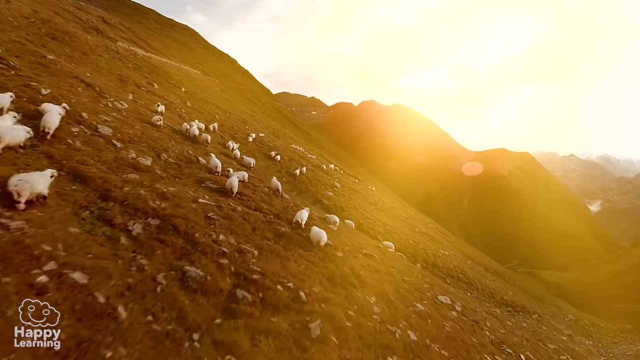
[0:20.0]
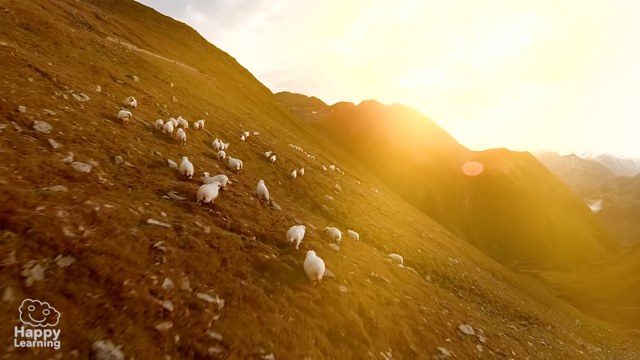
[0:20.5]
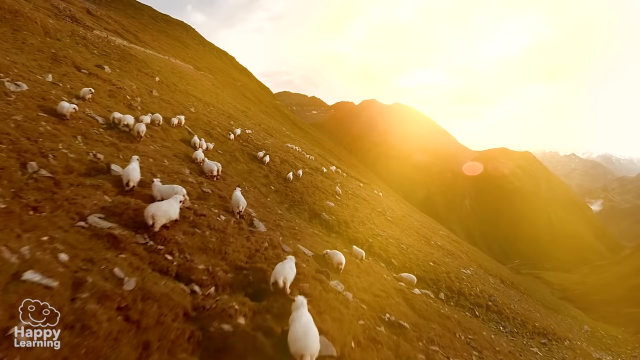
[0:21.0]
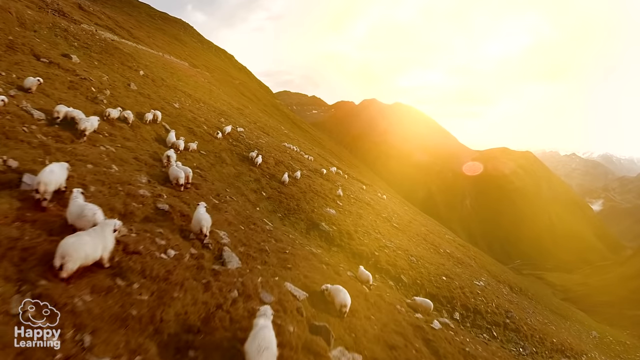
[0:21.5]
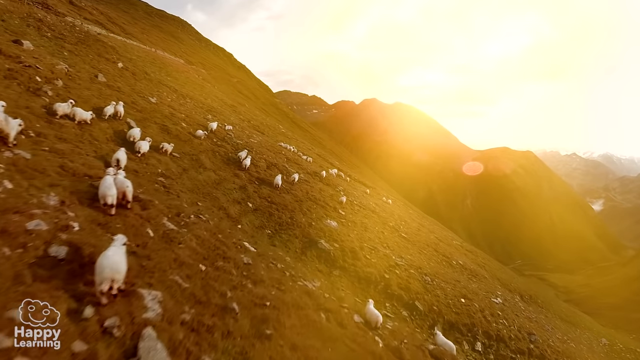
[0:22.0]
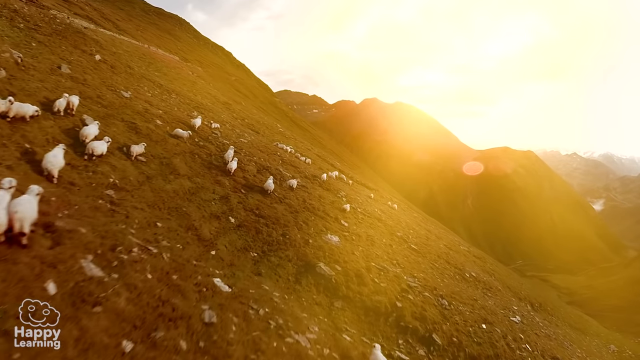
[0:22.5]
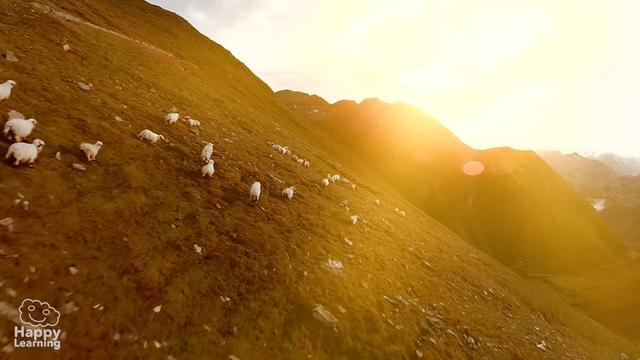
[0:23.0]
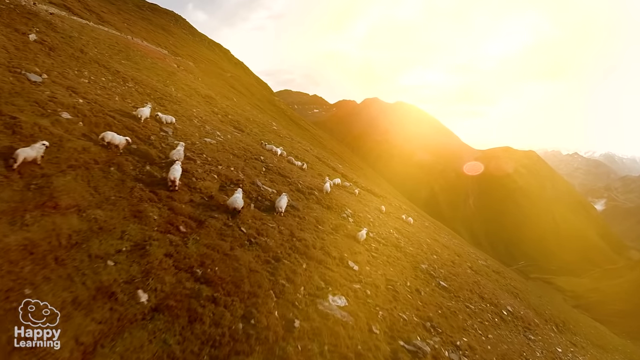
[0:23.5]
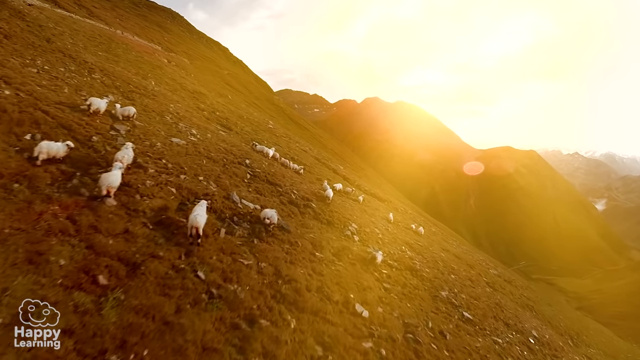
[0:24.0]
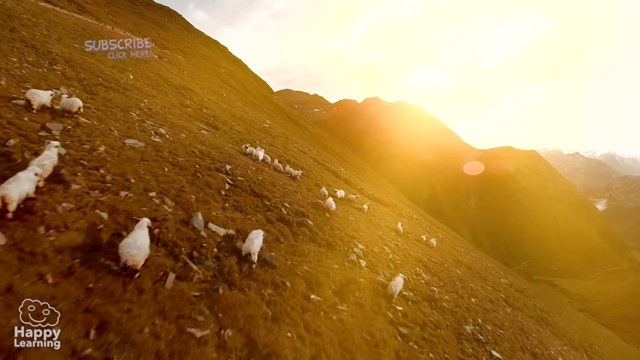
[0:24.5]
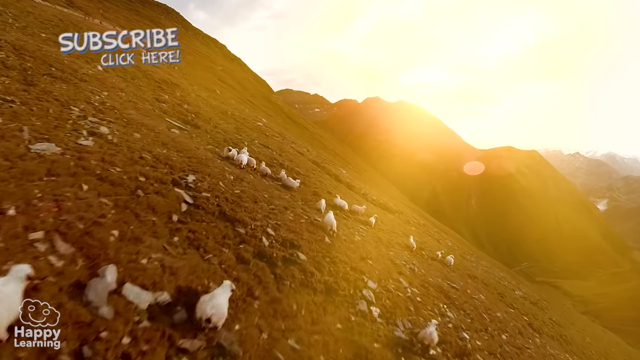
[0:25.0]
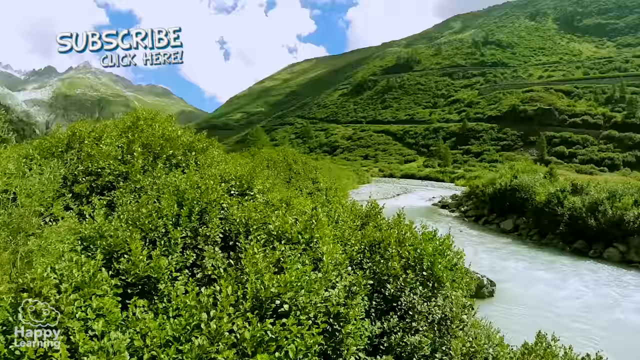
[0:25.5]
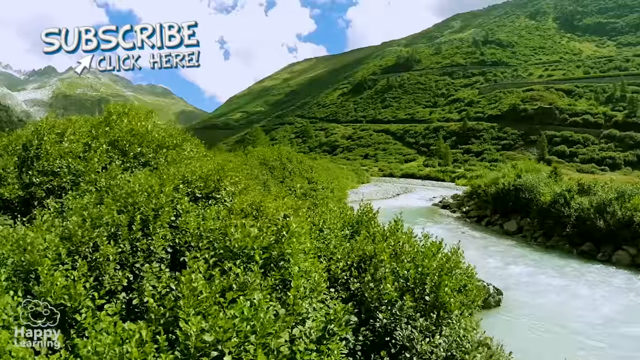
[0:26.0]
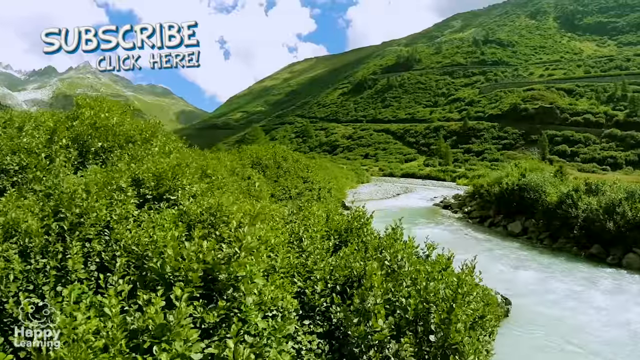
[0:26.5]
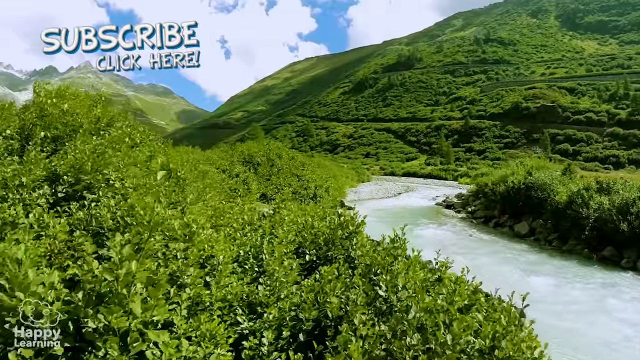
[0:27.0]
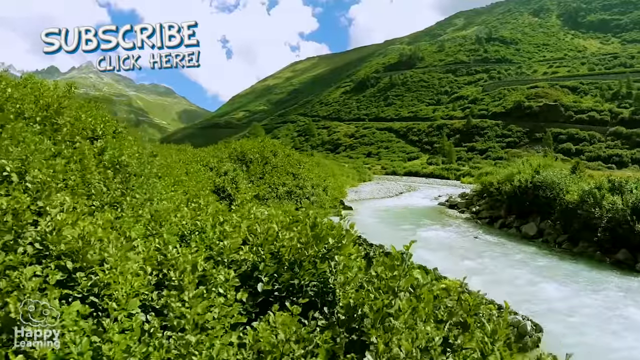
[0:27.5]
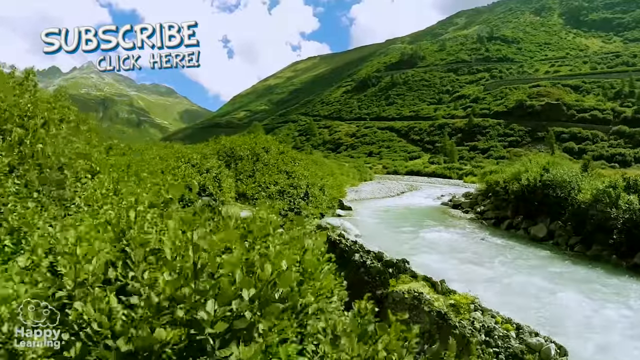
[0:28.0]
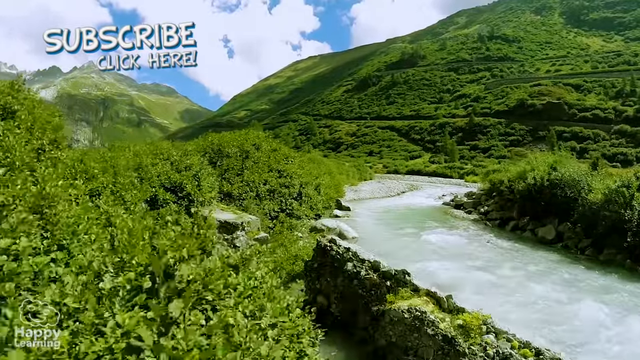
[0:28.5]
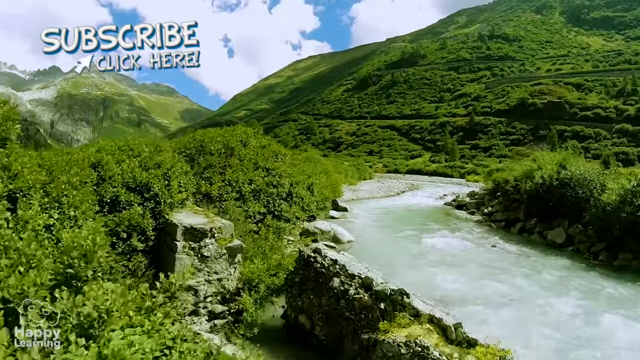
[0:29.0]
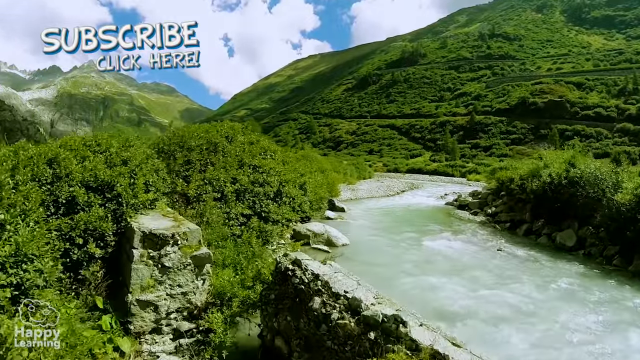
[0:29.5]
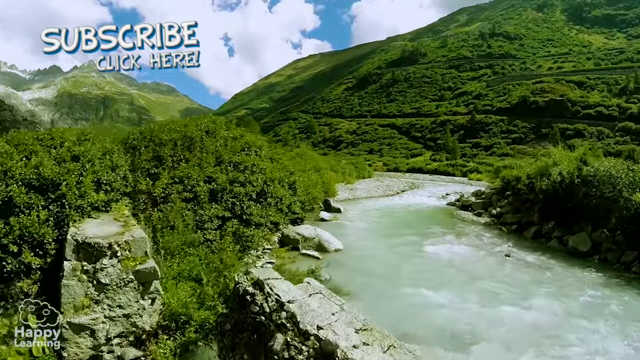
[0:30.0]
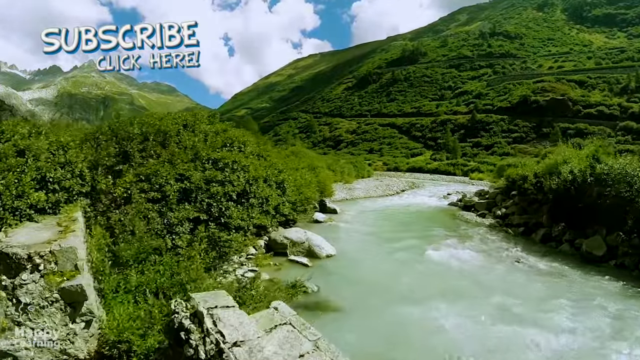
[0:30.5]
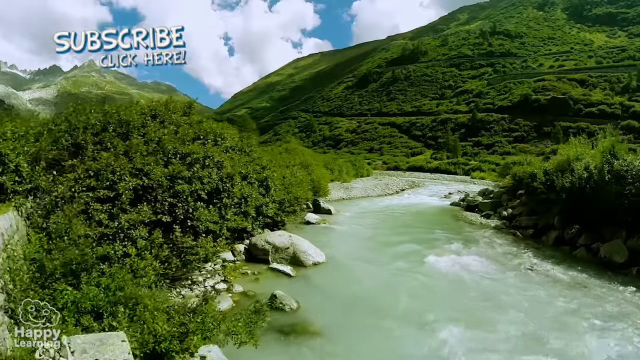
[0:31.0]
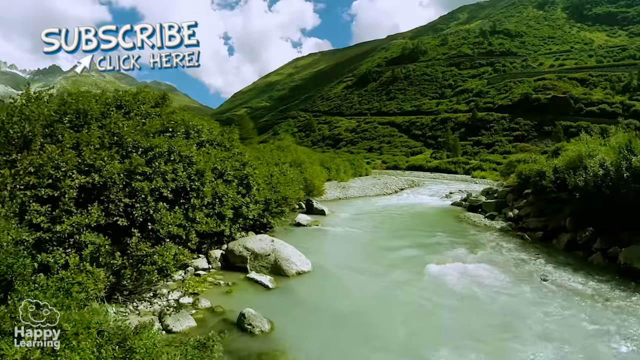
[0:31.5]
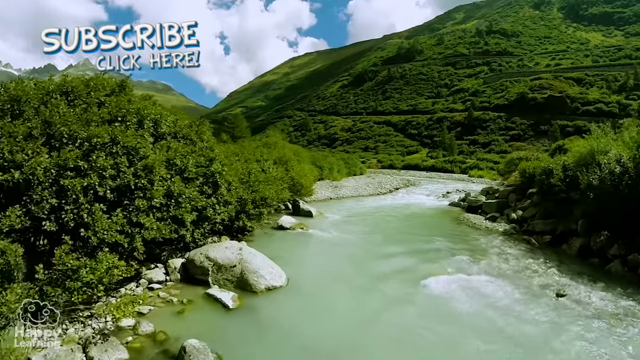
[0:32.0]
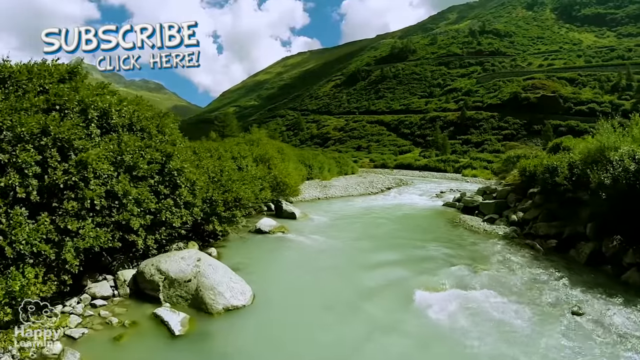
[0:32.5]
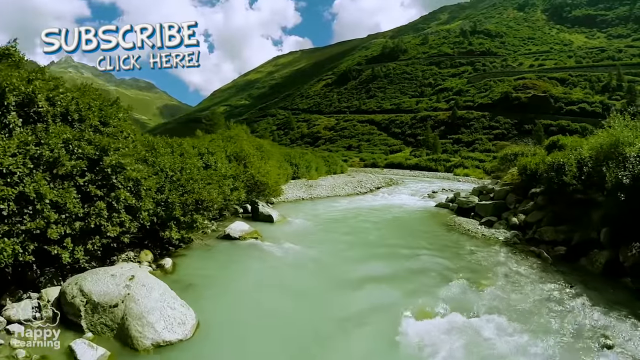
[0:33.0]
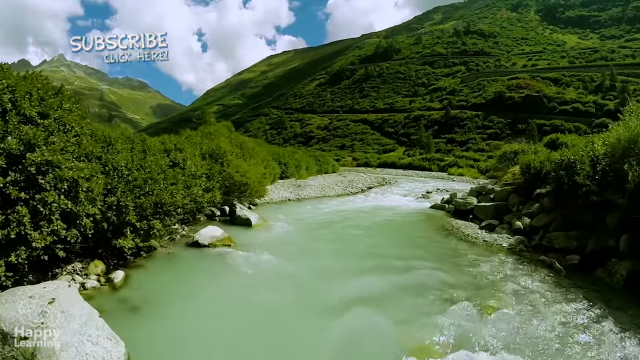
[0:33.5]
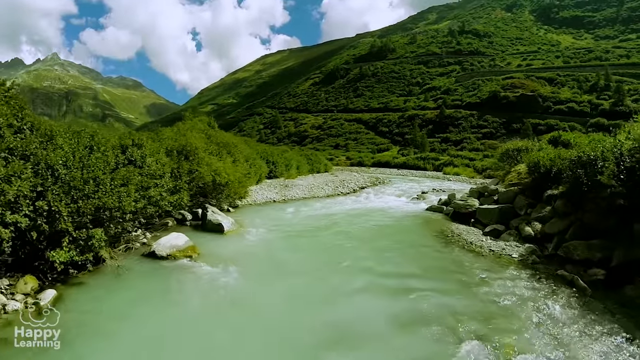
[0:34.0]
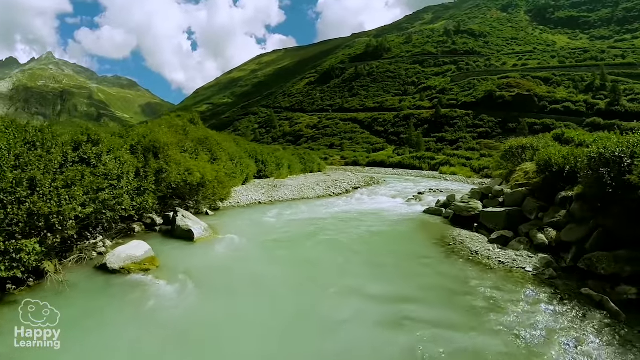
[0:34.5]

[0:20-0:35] The camera, tilted, zooms over a grassy field with many sheep grazing across it, and the sheep start running from the camera overhead. Next is a shot of a green hillside and green trees with a river winding through them. The camera moves down past the trees and some rocks until it is hovering over the river and moving across it. The video goes back to the camera zooming over the field with the sheep, then back to the river. The camera zooms along the river, moving towards an opening where the river is more turbulent and closer to the green hills.